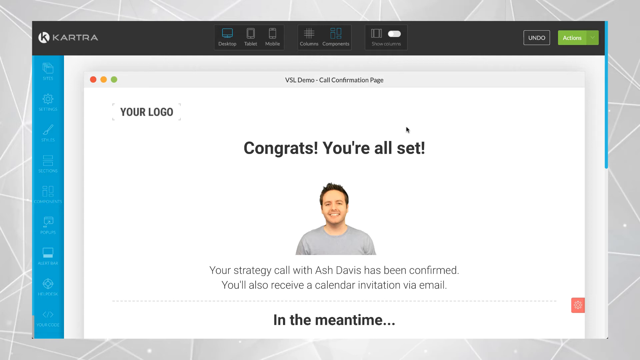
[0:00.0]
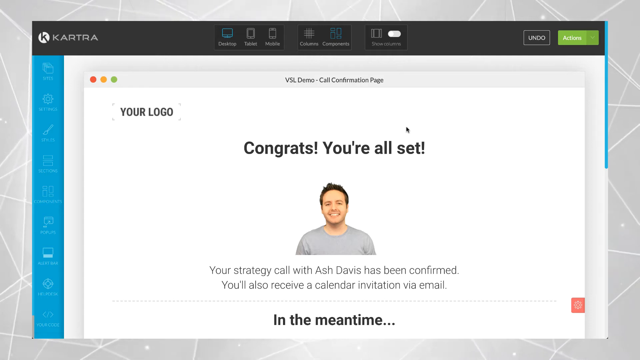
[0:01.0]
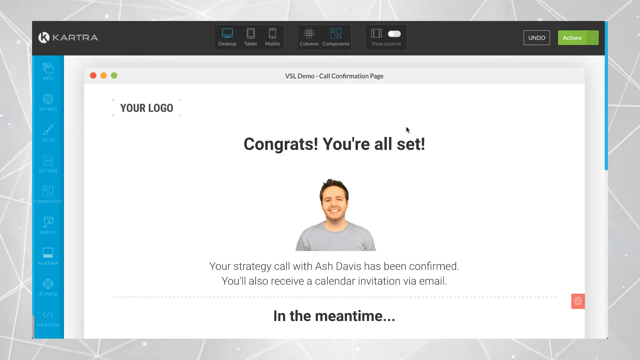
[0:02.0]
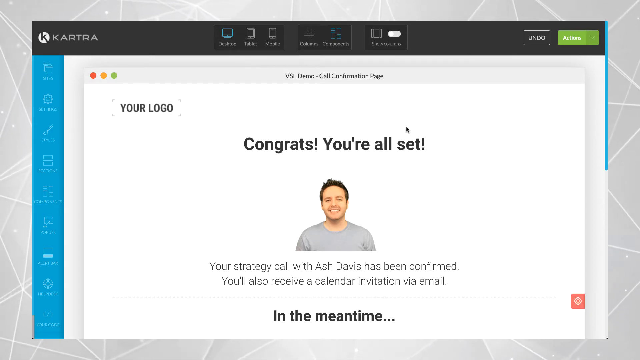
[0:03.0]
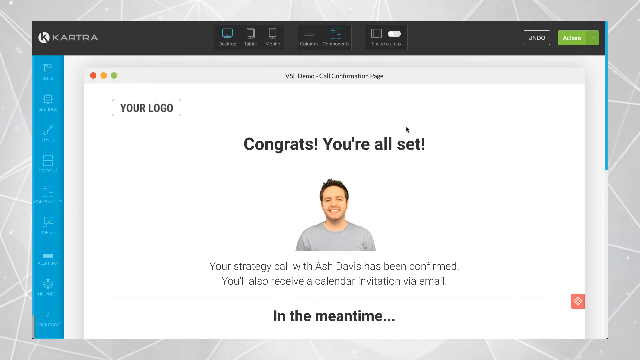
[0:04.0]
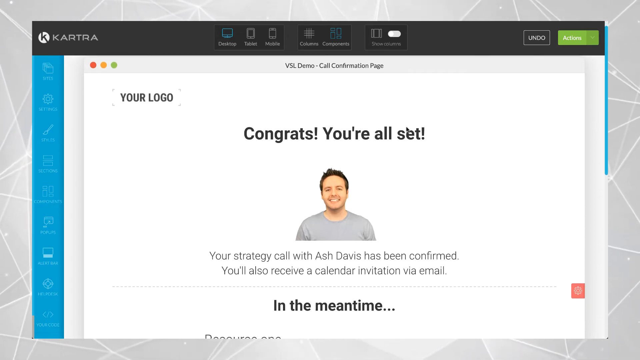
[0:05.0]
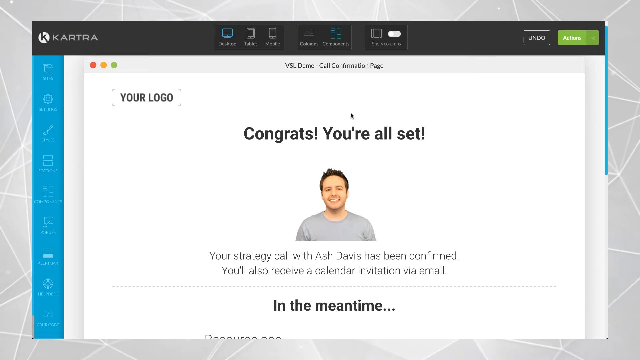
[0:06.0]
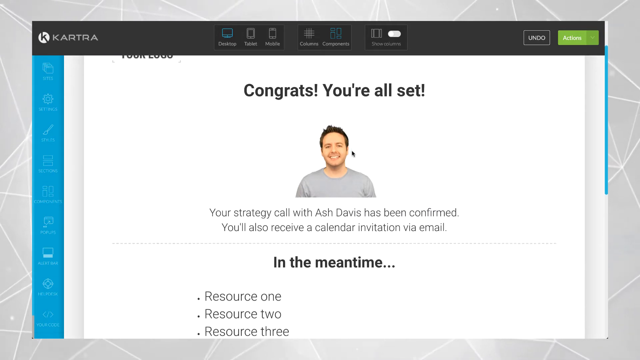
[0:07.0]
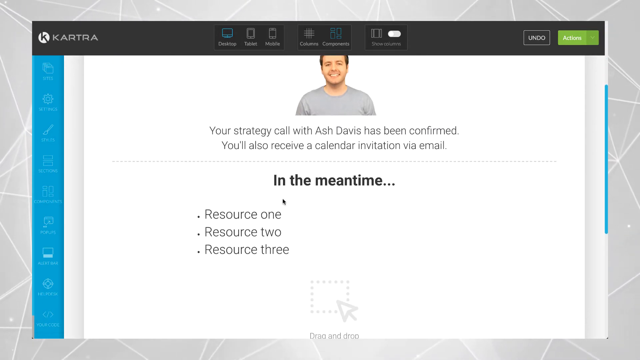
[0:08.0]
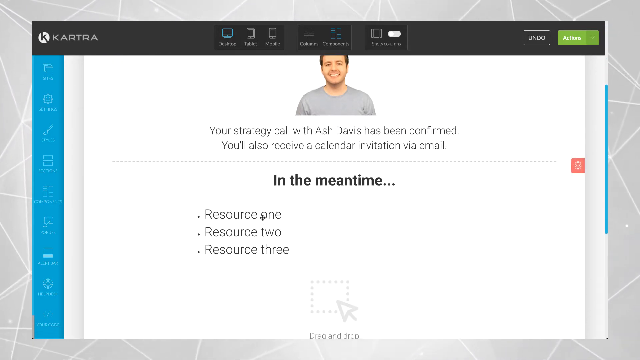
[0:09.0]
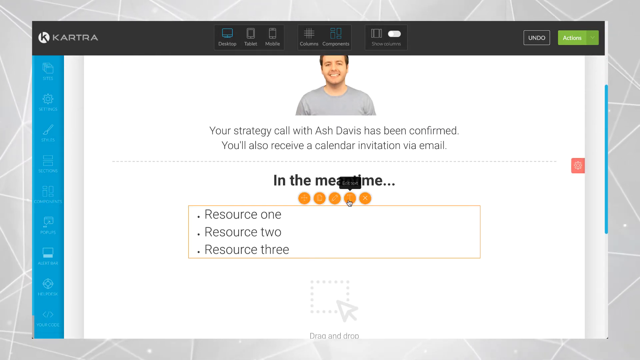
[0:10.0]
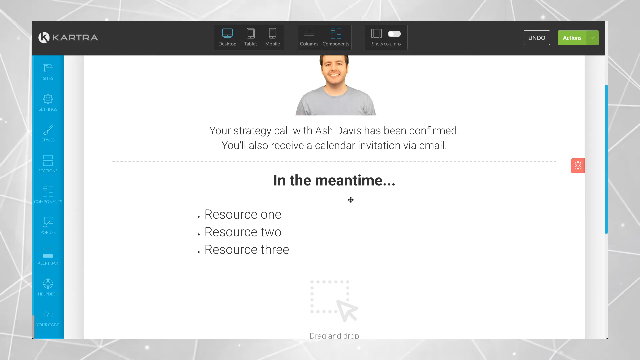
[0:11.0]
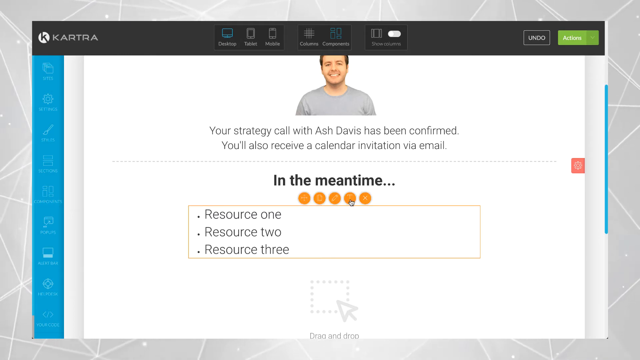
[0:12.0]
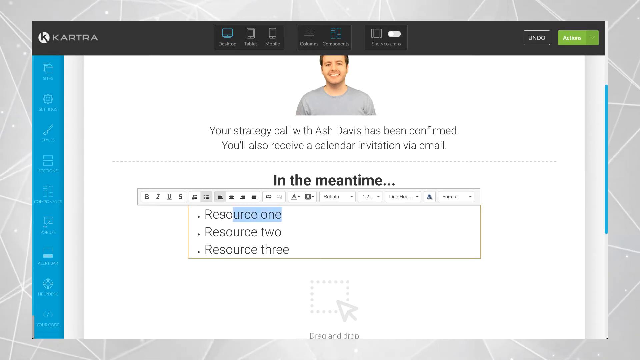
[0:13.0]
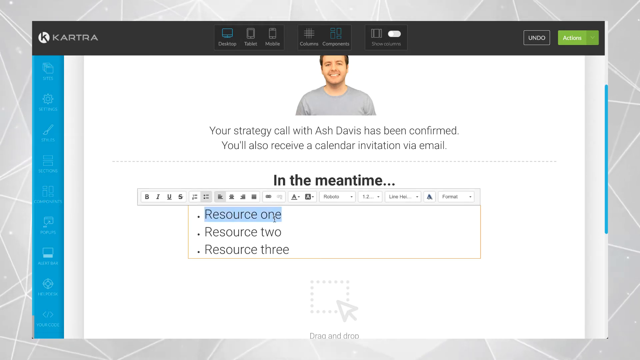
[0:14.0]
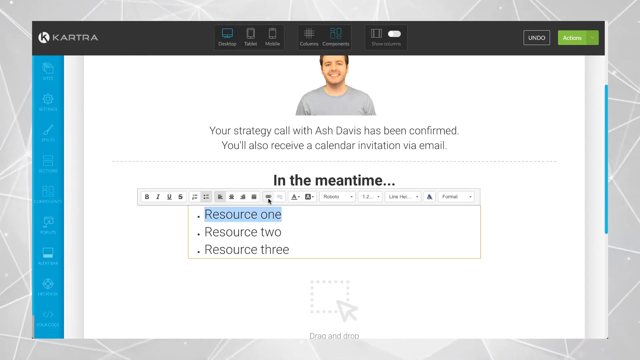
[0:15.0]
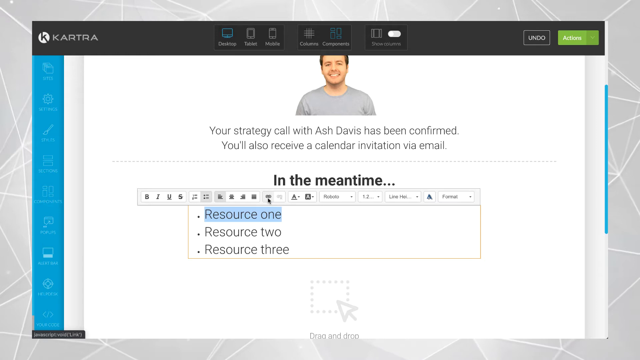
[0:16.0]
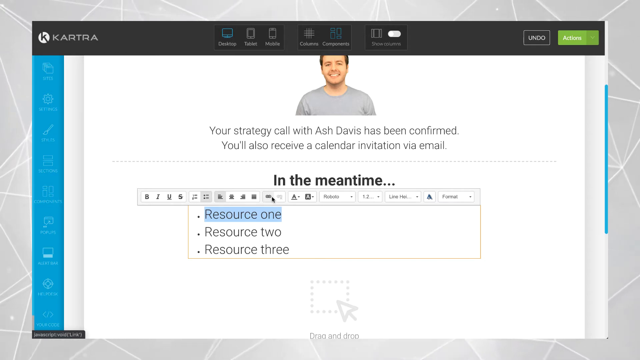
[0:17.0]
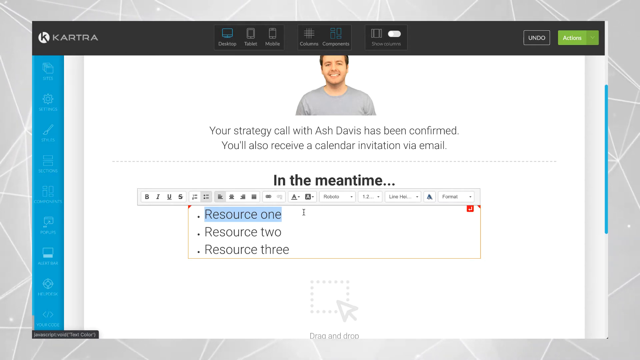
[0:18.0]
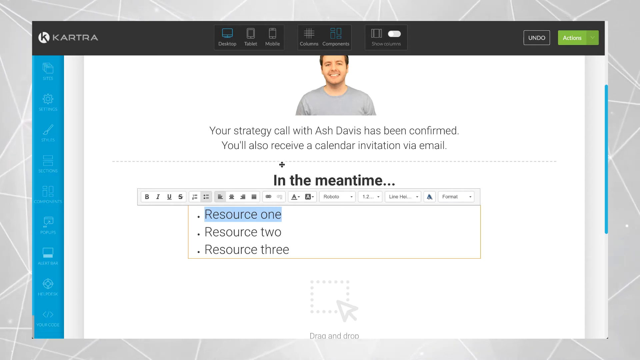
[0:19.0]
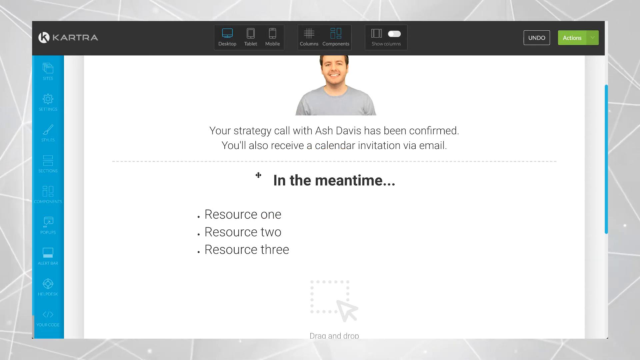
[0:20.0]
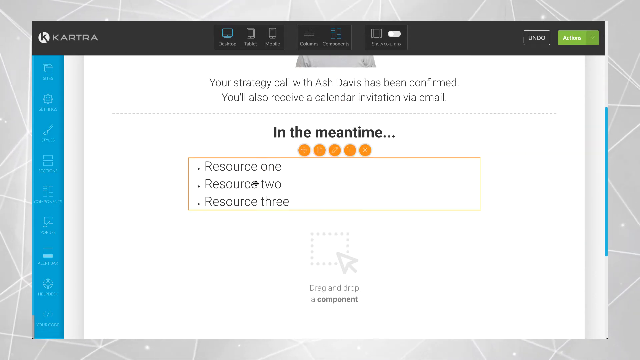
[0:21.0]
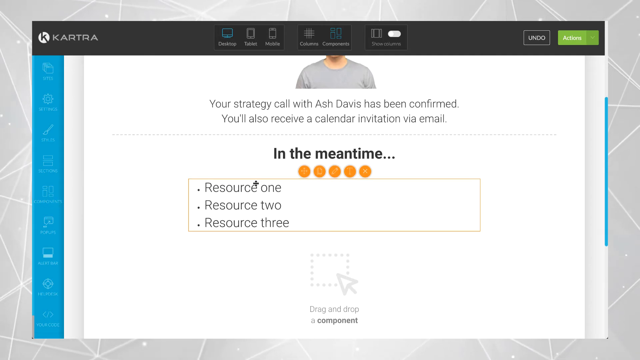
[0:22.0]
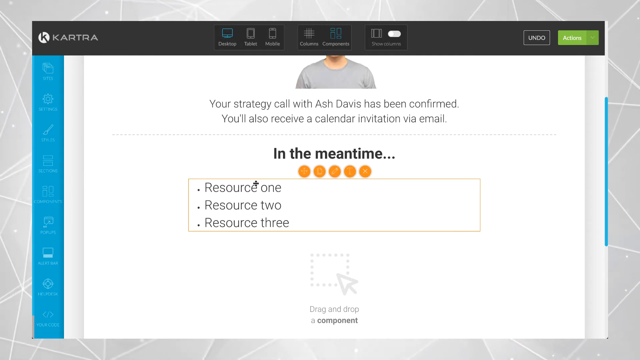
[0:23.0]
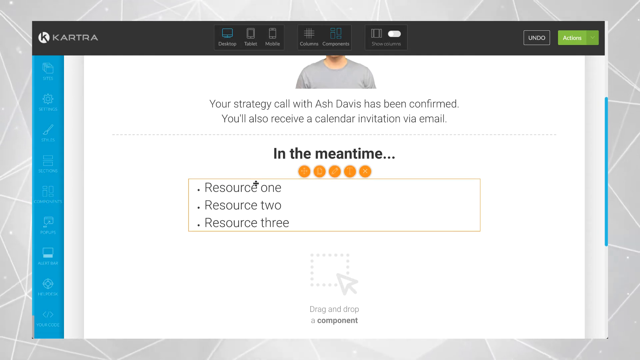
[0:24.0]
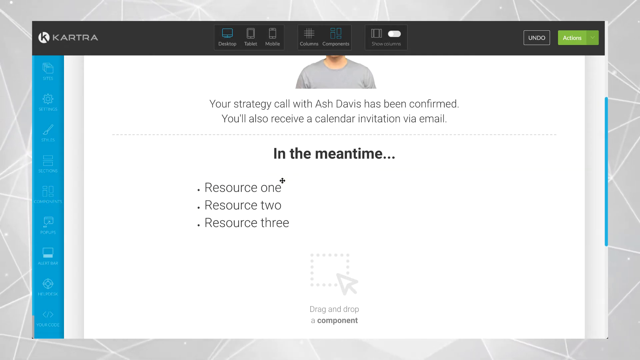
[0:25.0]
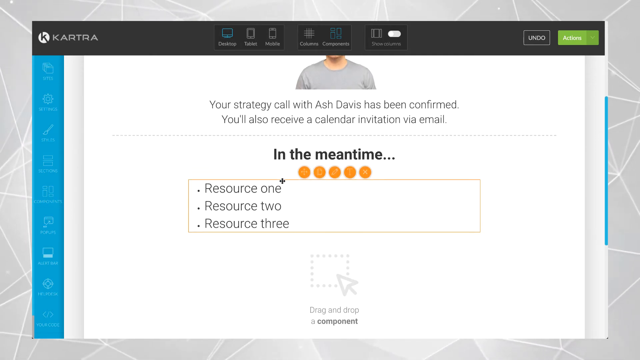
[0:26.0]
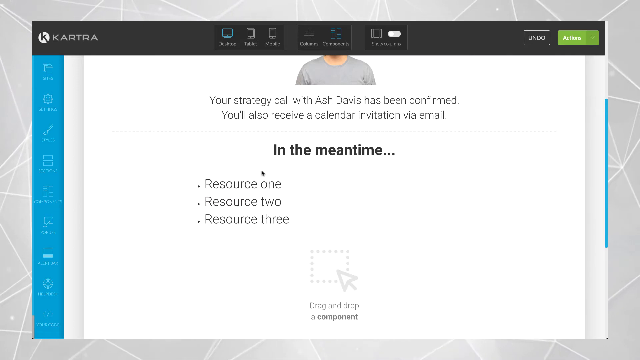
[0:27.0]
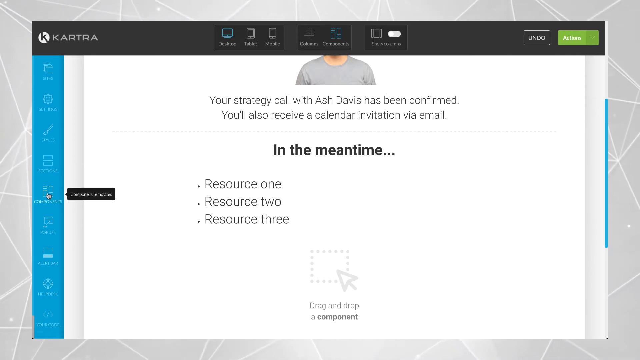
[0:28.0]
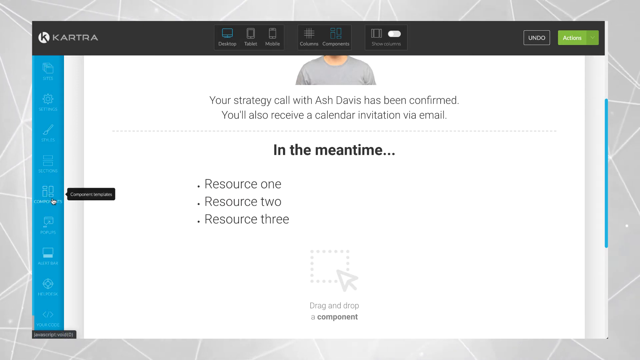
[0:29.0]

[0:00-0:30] At the top of the screen is "Kartra," which looks to be a brand. The page then says that this is a "VSL demo," followed by "call confirmation page" and "congratulations, you're all set." There is a picture of a man with dark hair and a gray shirt, and text reading "your strategy call with Ash Davis has been confirmed. You'll also receive a calendar invitation via email." A mouse cursor is on the page. The page scrolls down a little, the cursor is circled around the screen, and then the page scrolls down further to text reading "in the meantime," followed by "resource 1," "resource 2," "resource 3." The cursor goes to resource 1, kind of highlights it, and clicks an orange button to edit. It then highlights resource 1 and moves around as it highlights a button. It clicks outside that area, goes back to it, and then goes to the left side of the screen, bringing up another set of options in a different highlight color than the rest of the screen.